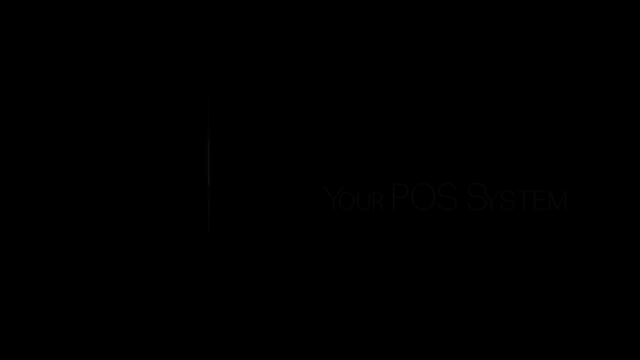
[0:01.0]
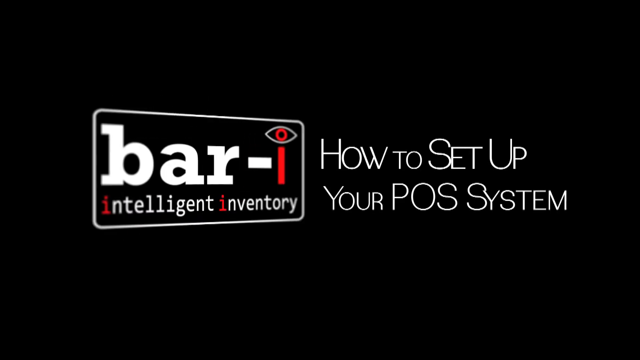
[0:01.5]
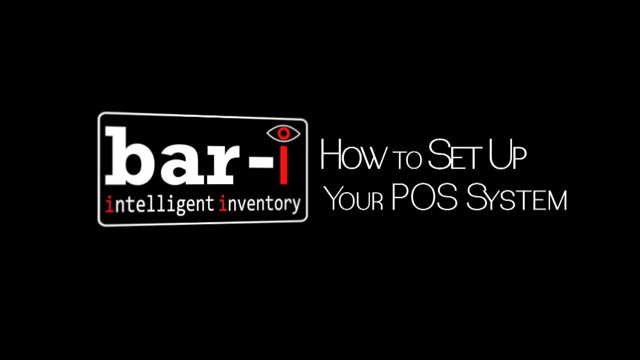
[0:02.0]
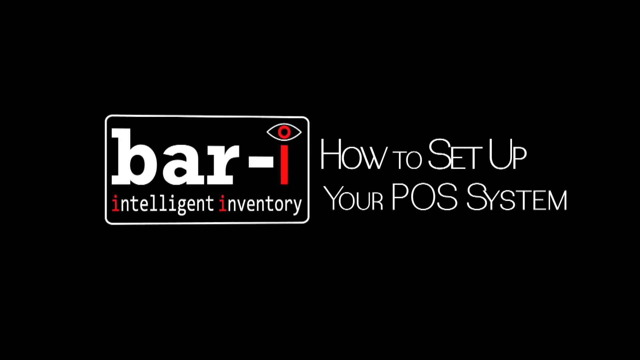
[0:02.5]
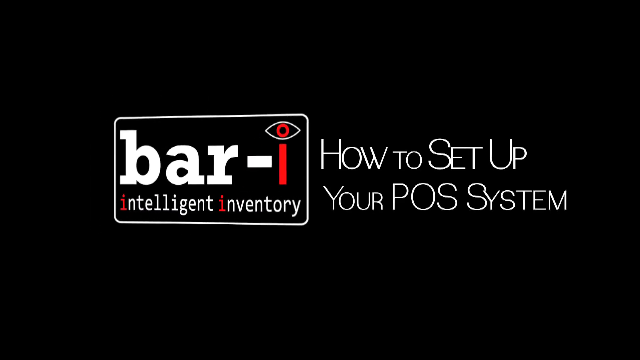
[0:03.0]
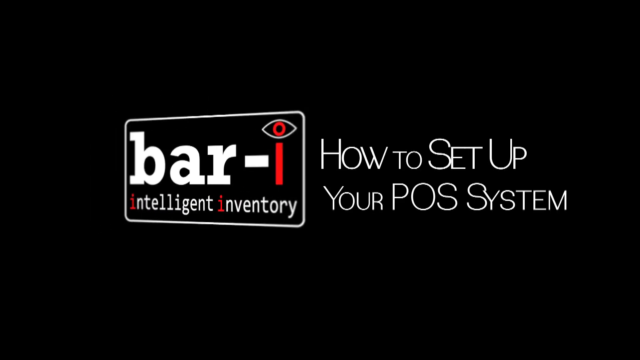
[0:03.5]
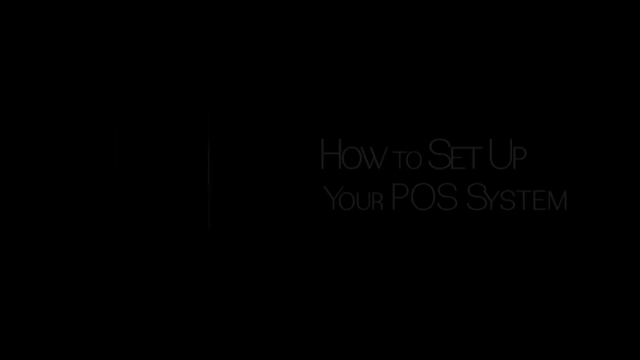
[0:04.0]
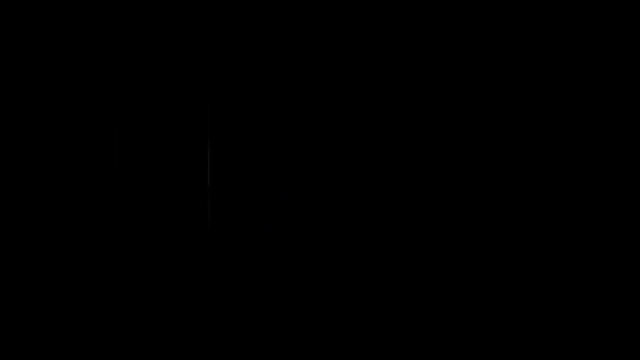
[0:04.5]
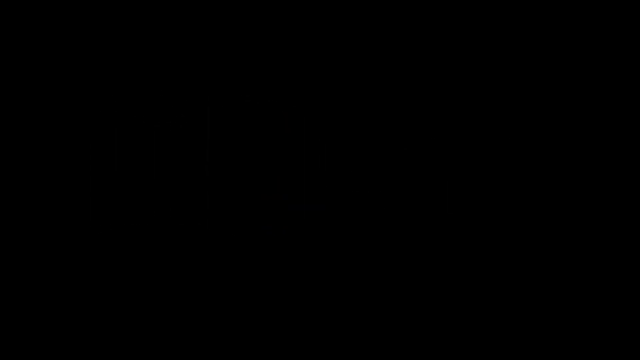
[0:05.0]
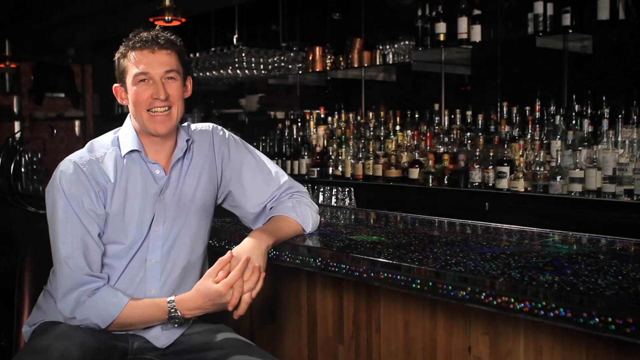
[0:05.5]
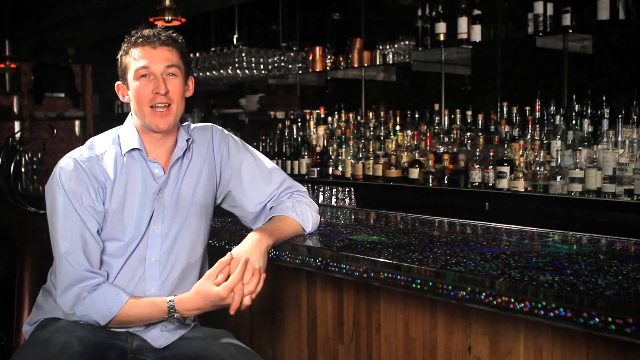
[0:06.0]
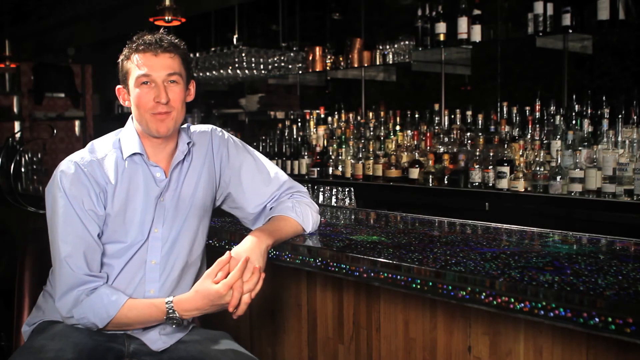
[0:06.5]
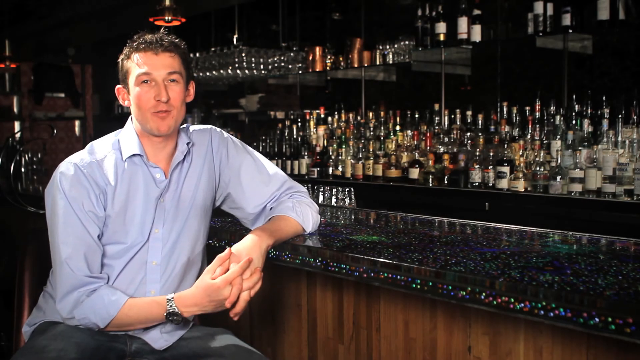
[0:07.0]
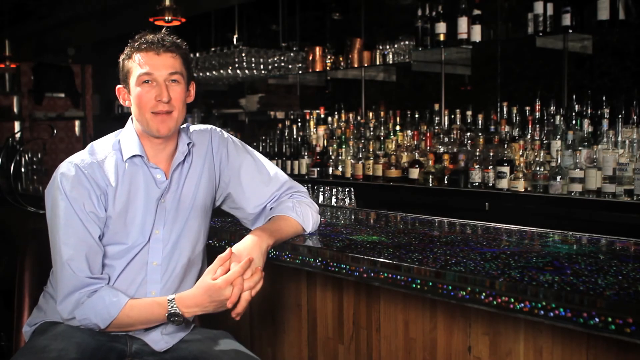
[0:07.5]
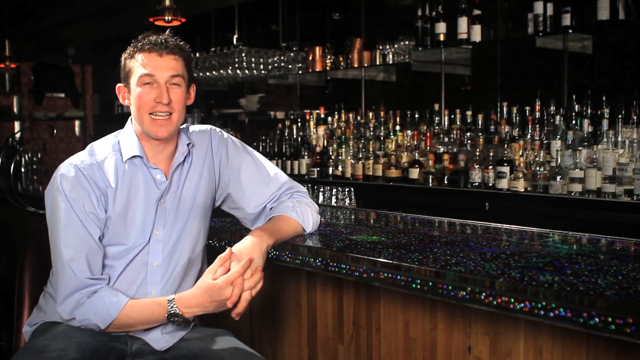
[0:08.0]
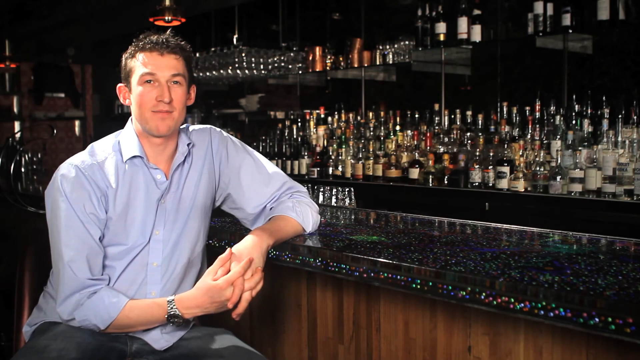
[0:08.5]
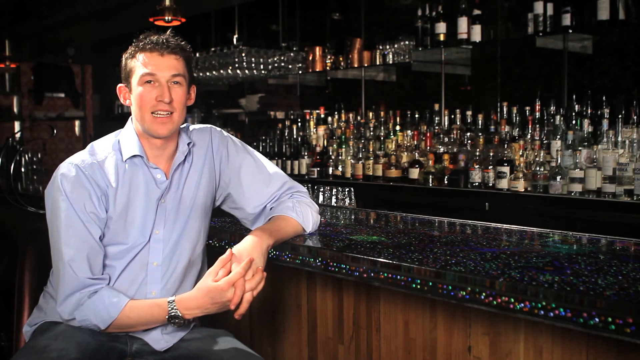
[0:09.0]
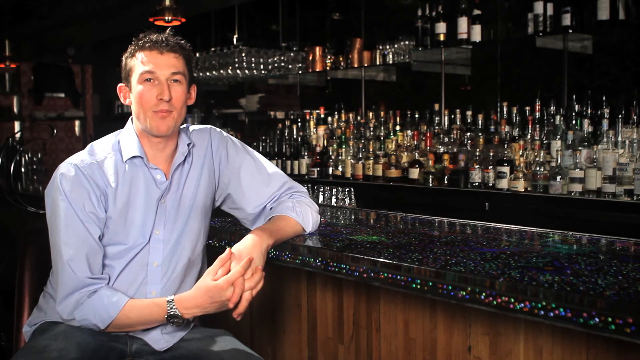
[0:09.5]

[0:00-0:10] The video opens on a title, "How to set up your POS system" (a point of sale system), on a black background with mostly white text. Next to that text is a box with the logo, name and tagline of the company that created the POS system, which reads "bar-I intelligent inventory". "bar" appears inside a box in thick white text, followed by a dash and the letter I; the dot of the I is a drawing of a human eye. The tagline "intelligent inventory" is in white, except that the first letter I of each word is red. The screen transitions to a man sitting at a bar. He wears a blue shirt, black pants and a silver-colored watch, and leans on the bar with his left elbow. The bar appears to have a wood base.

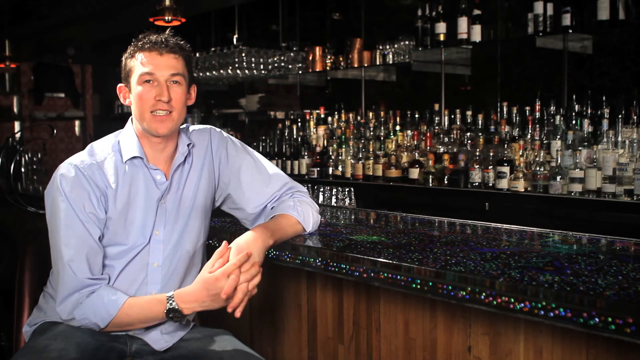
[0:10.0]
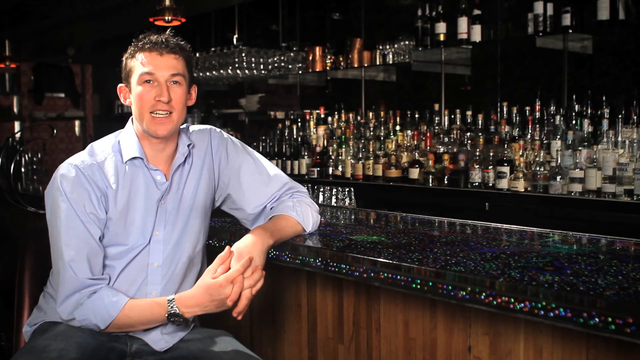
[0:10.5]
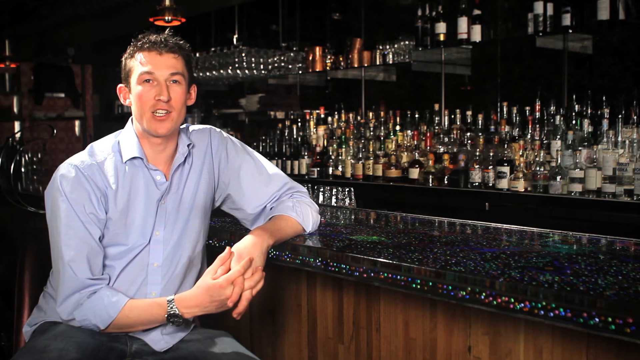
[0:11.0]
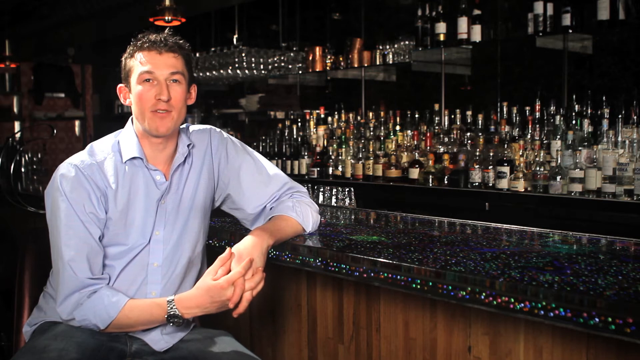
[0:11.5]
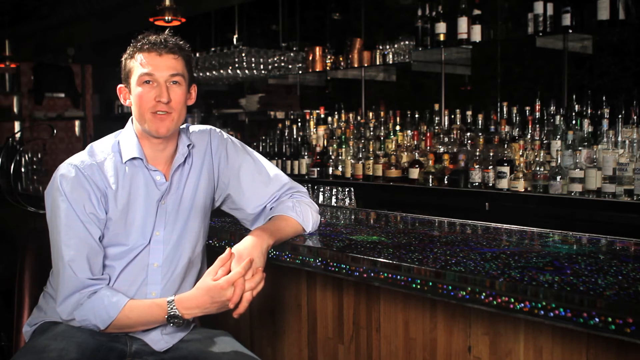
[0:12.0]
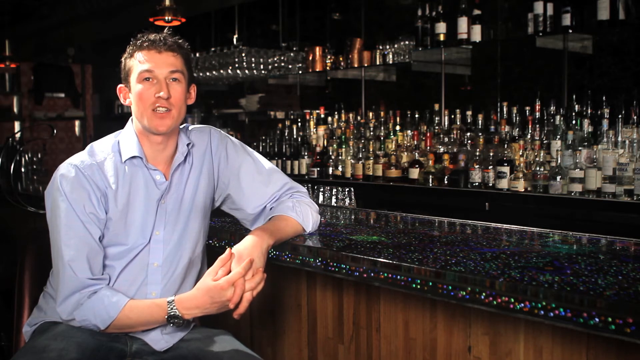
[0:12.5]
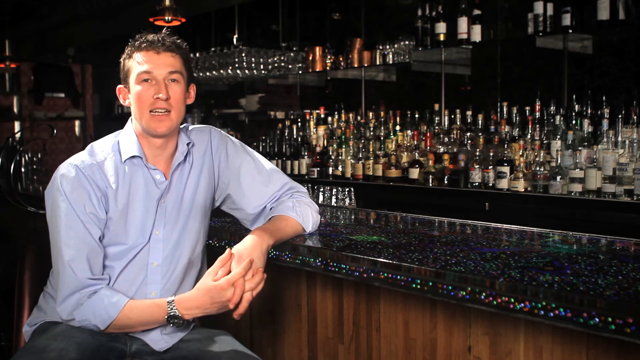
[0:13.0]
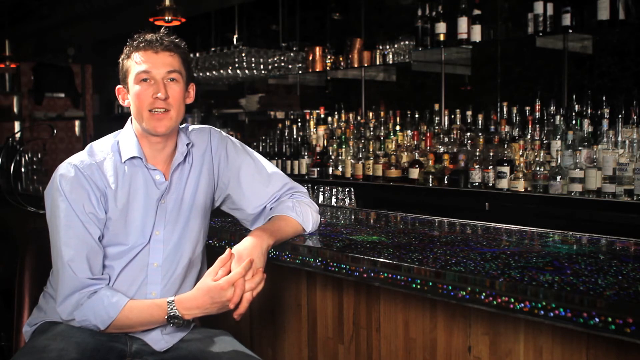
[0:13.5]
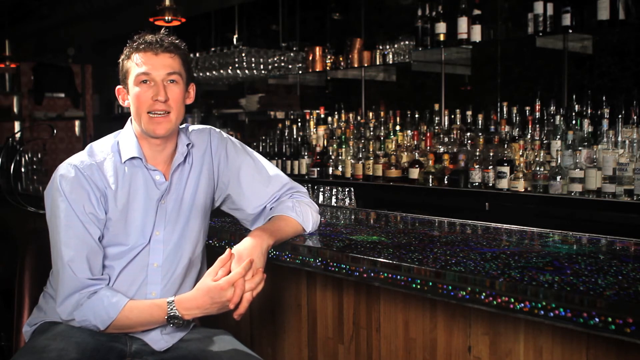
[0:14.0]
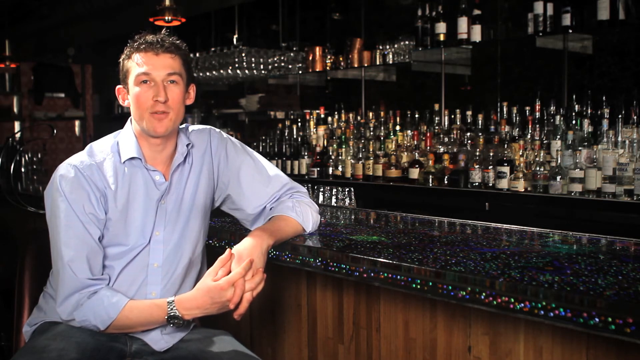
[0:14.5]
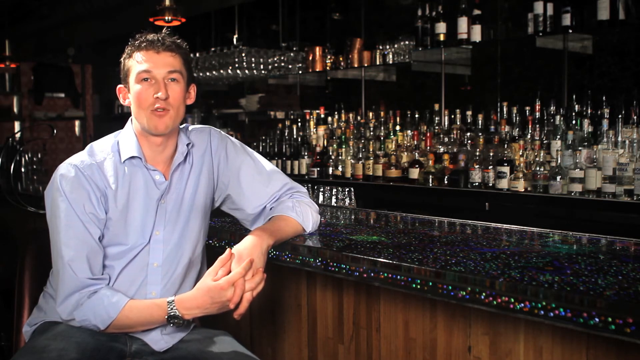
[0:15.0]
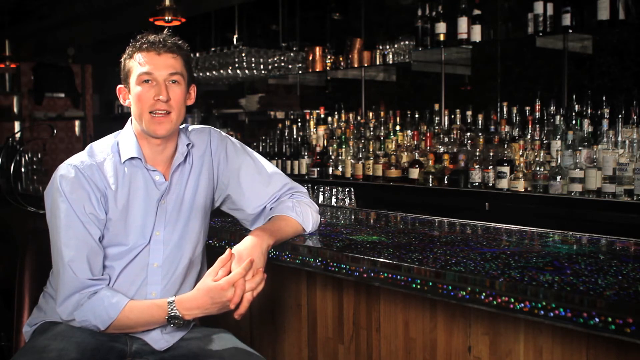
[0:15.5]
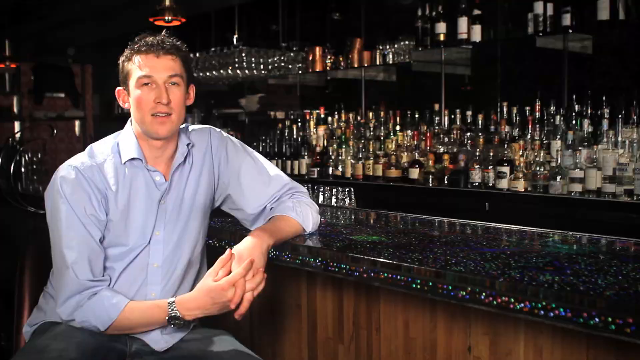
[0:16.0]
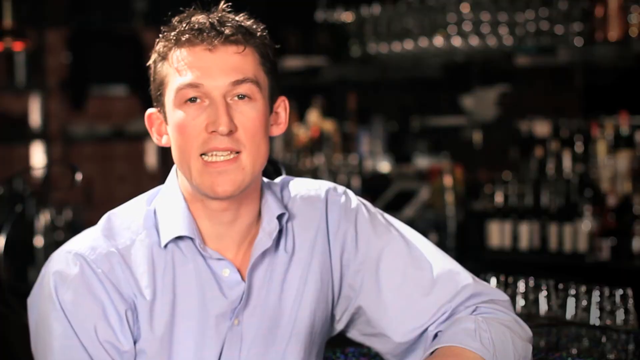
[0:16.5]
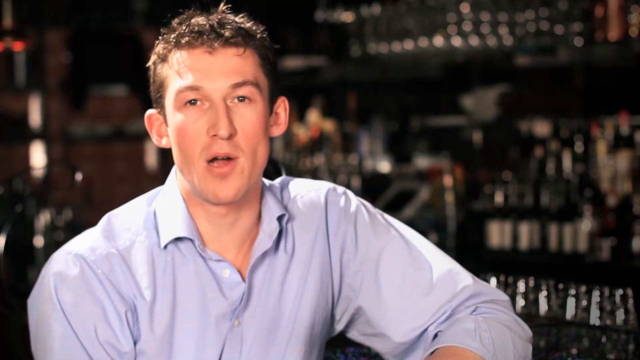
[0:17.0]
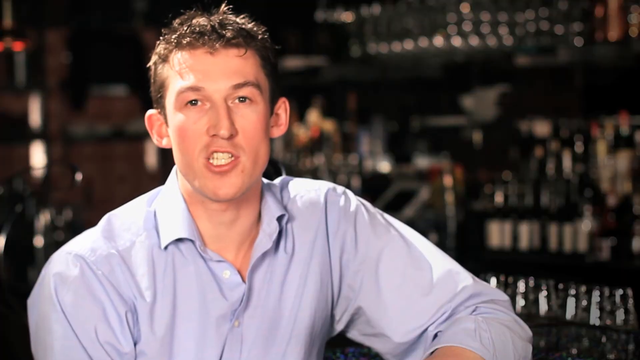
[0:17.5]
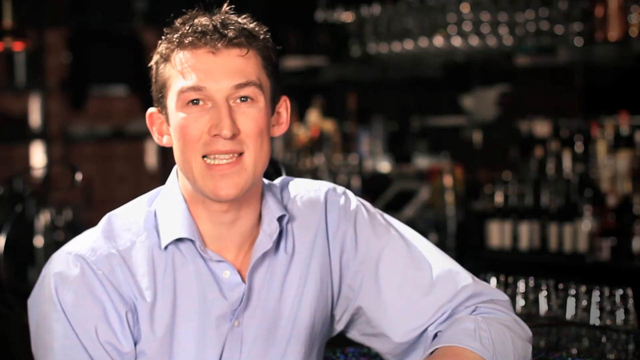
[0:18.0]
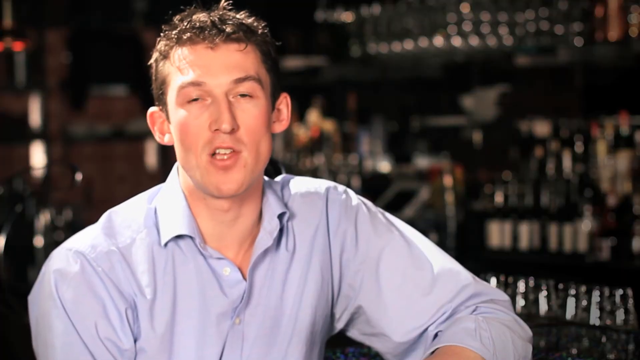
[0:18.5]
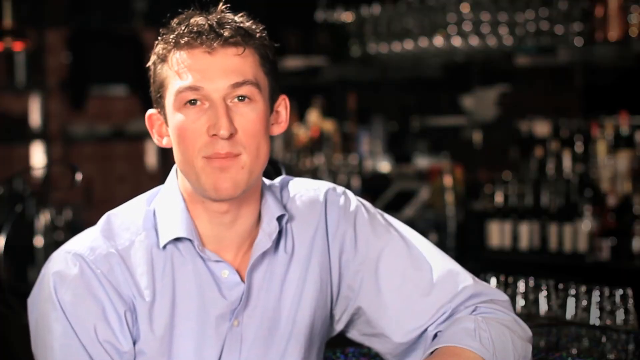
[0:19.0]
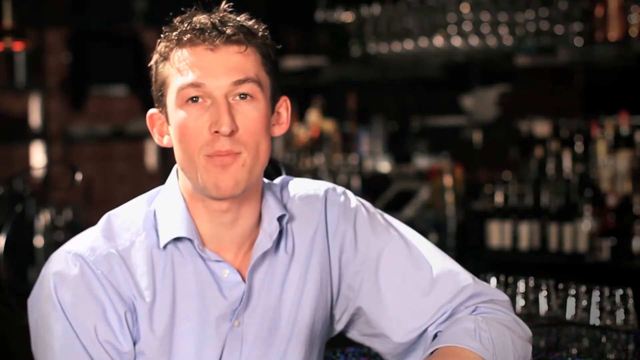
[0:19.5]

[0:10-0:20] A man is sitting at a bar, probably in a restaurant or a training bar. He wears a blue shirt, black pants and a gold watch, and leans on the bar countertop. Behind him is the bar setup with liquor, and glasses including cocktail glasses and wine glasses, as well as shakers. A mirror, which appears to be the entire back wall, is behind the liquor storage area. He speaks to the camera with his fingers interlaced and his hands held together, and his left leg shakes as he speaks. The view then moves to a tight shot of him speaking to the camera.